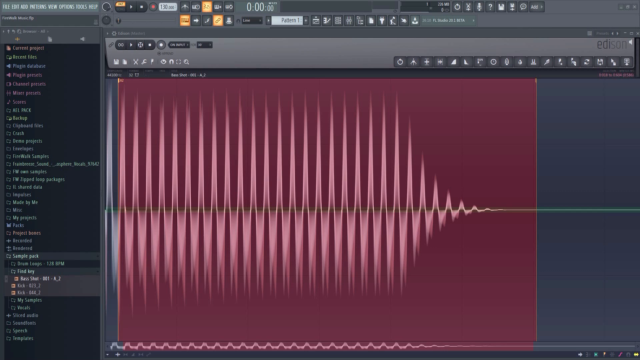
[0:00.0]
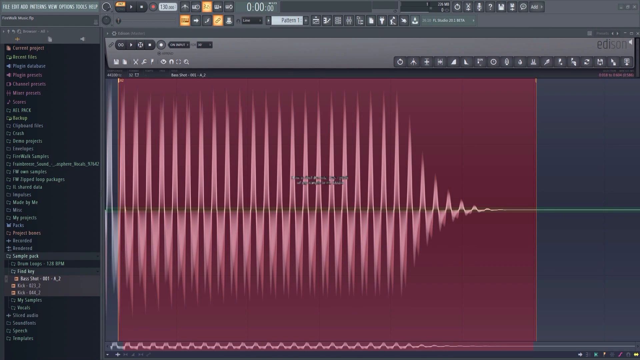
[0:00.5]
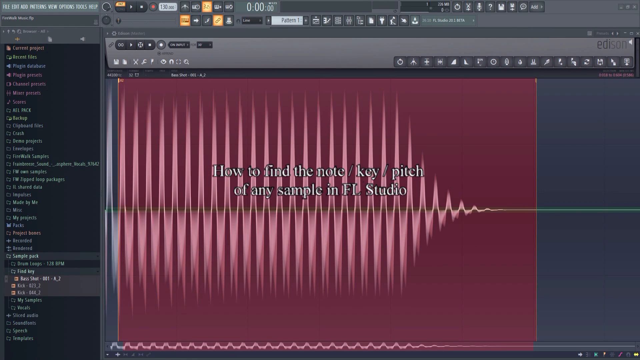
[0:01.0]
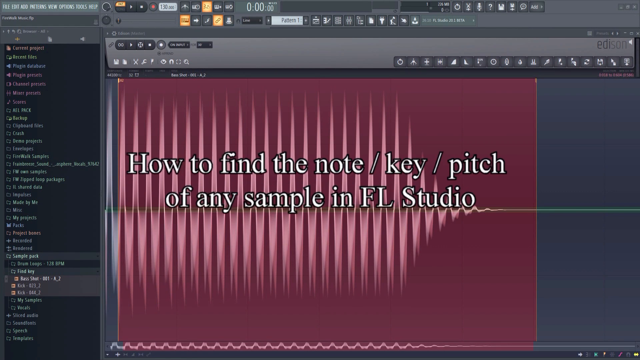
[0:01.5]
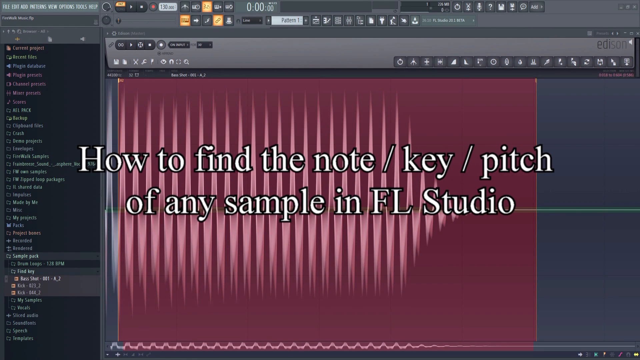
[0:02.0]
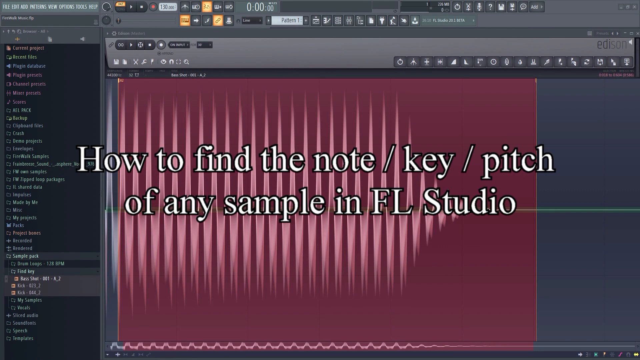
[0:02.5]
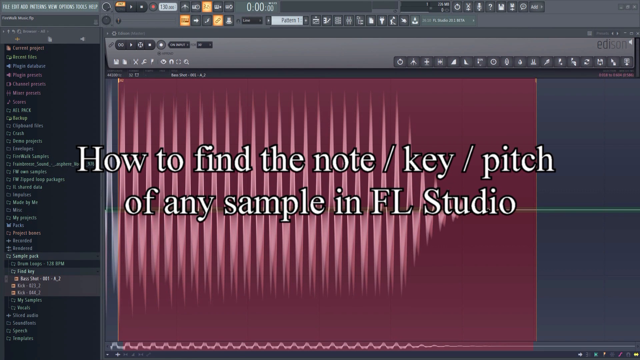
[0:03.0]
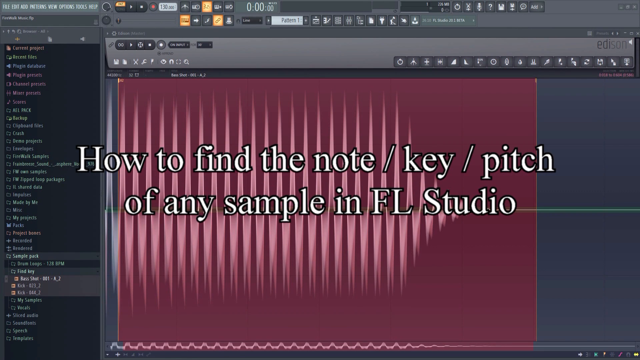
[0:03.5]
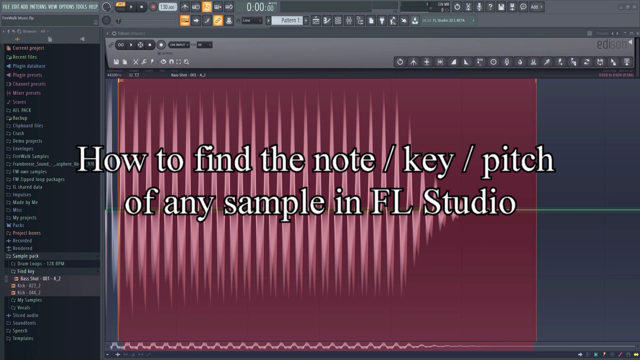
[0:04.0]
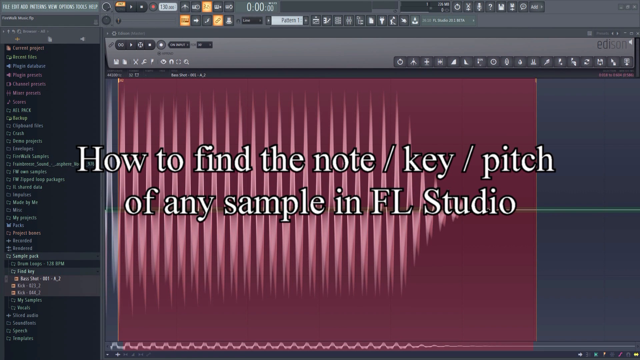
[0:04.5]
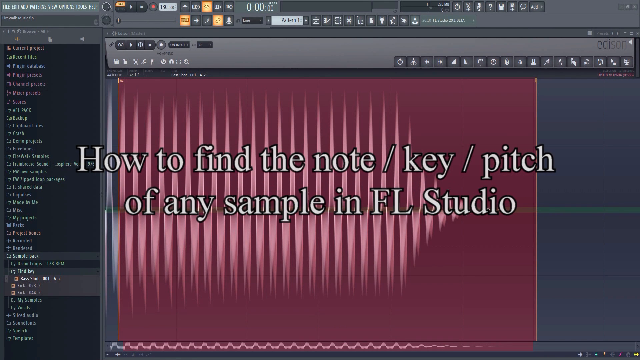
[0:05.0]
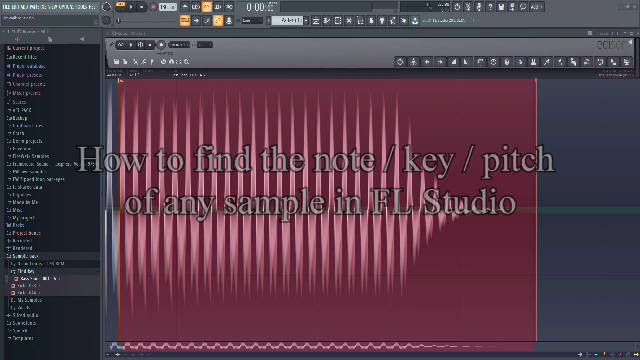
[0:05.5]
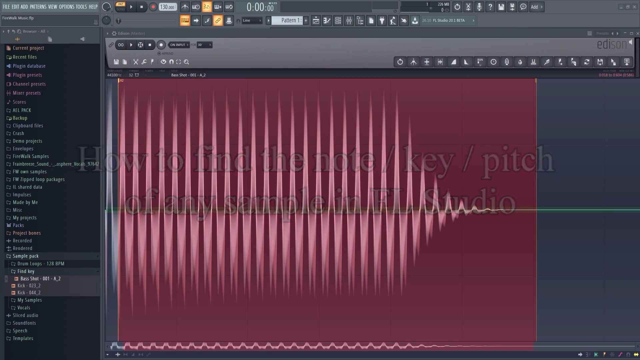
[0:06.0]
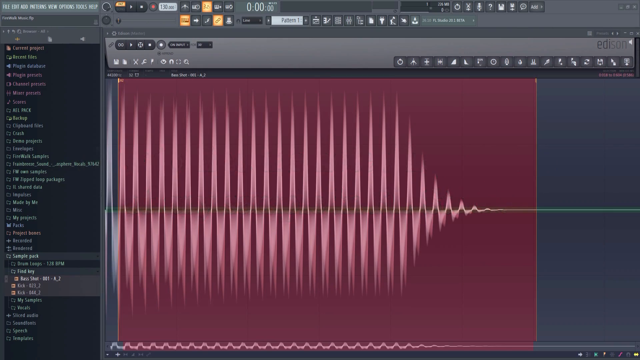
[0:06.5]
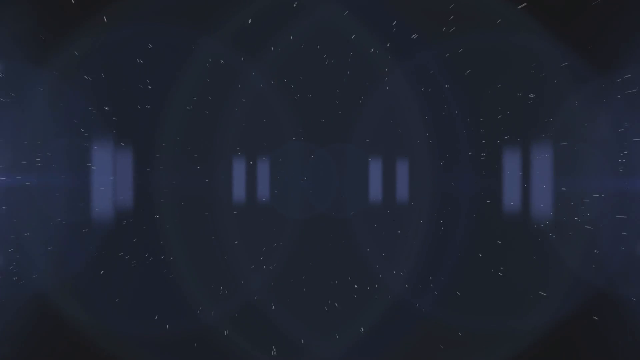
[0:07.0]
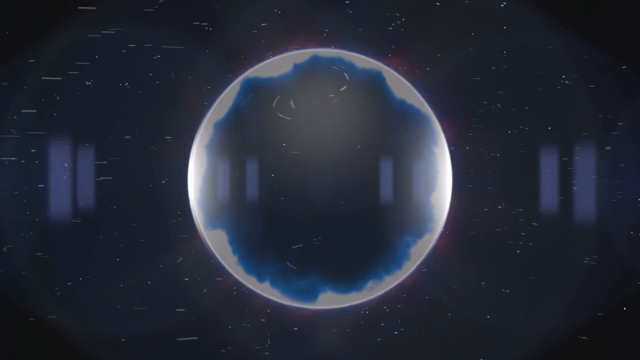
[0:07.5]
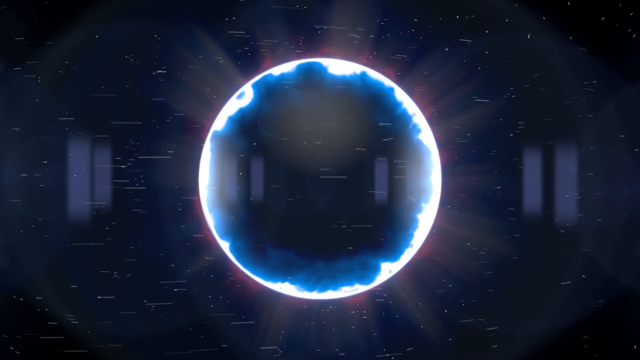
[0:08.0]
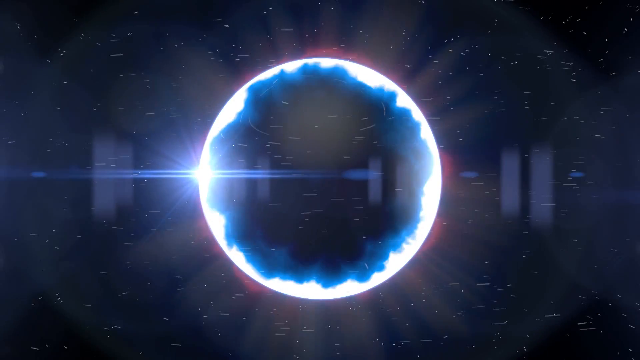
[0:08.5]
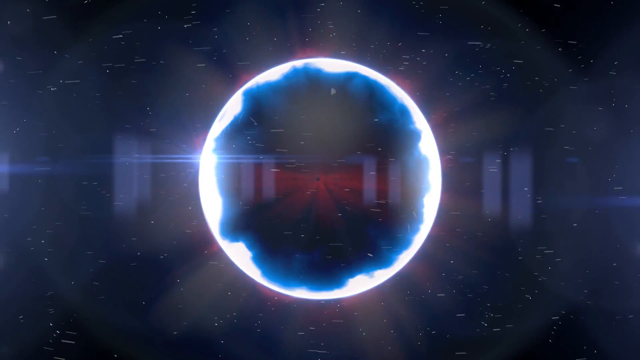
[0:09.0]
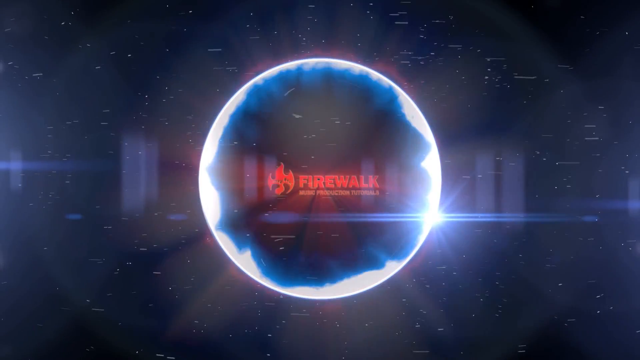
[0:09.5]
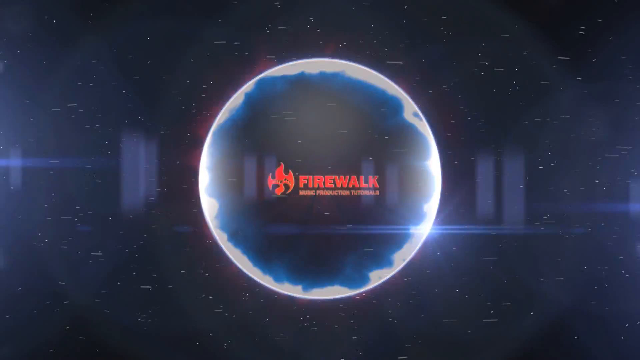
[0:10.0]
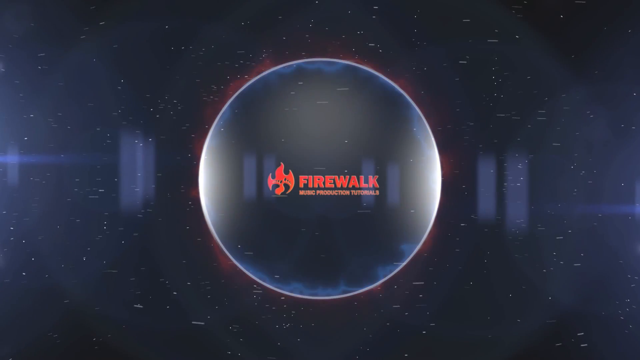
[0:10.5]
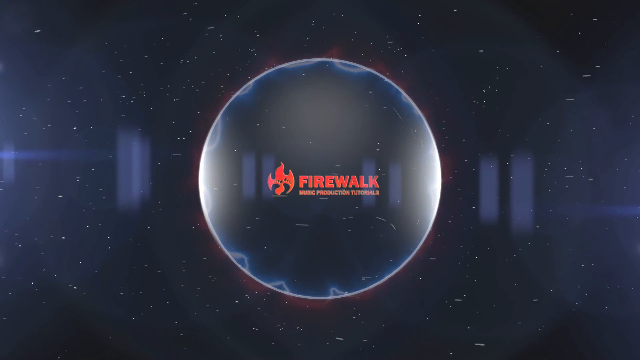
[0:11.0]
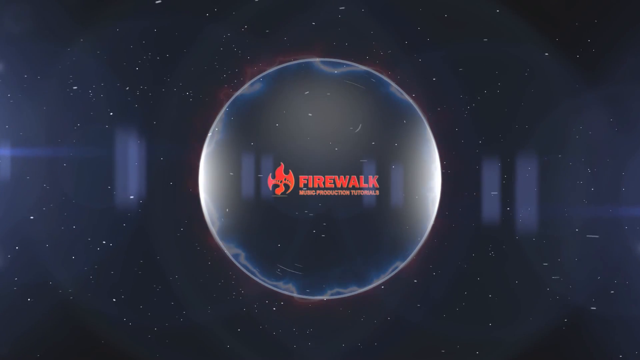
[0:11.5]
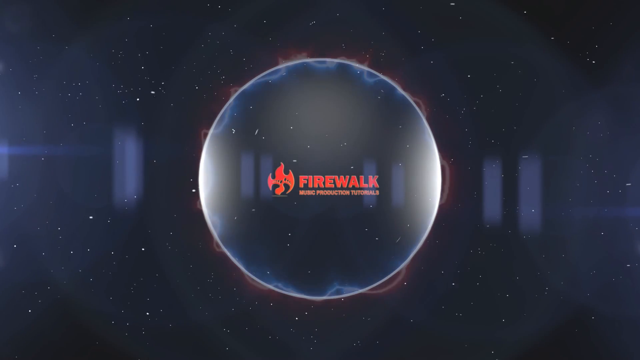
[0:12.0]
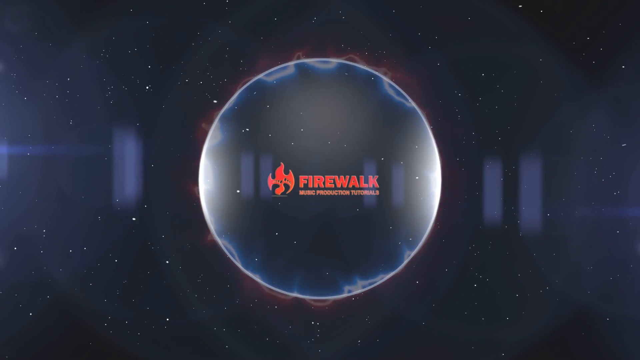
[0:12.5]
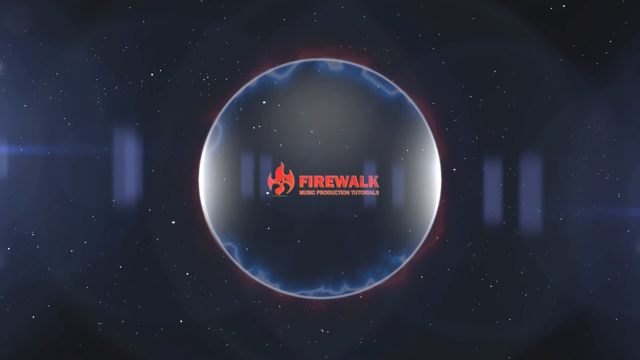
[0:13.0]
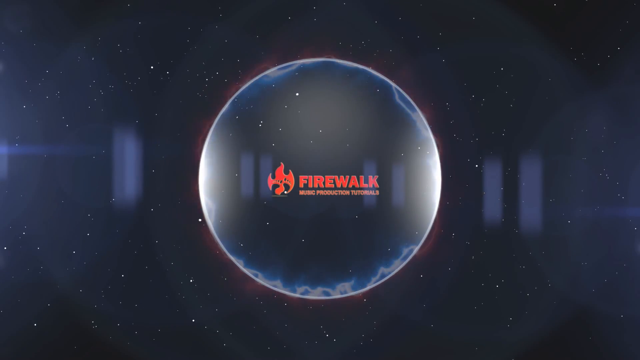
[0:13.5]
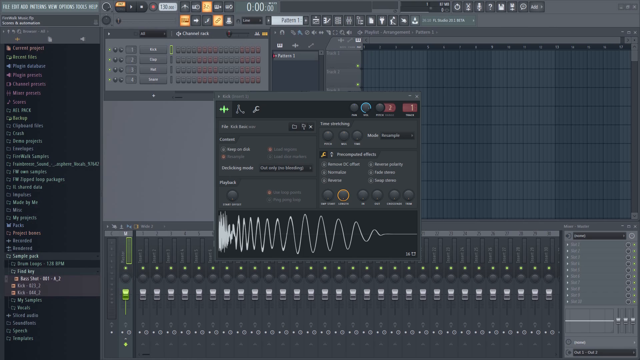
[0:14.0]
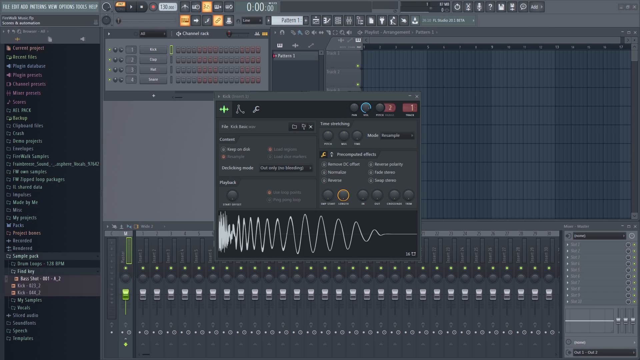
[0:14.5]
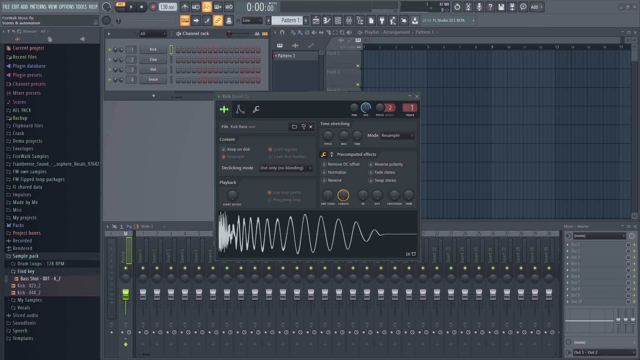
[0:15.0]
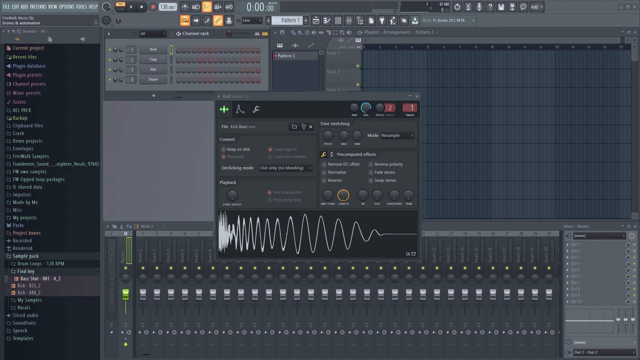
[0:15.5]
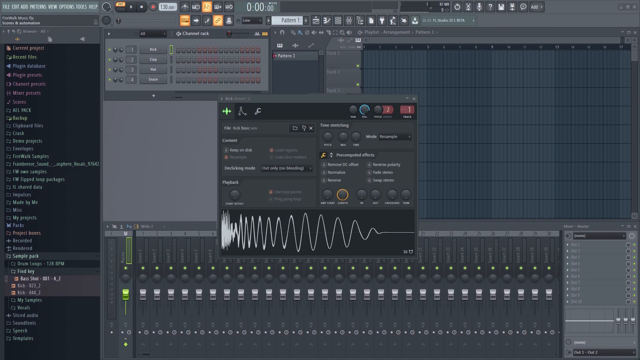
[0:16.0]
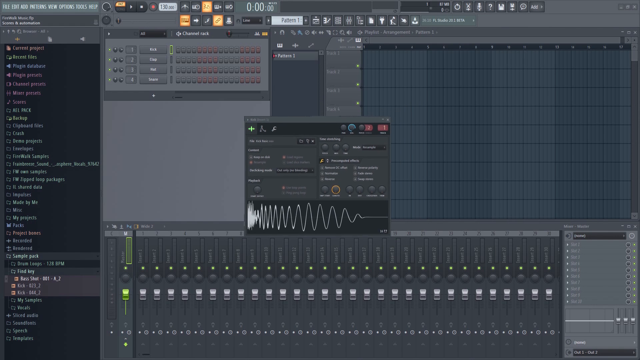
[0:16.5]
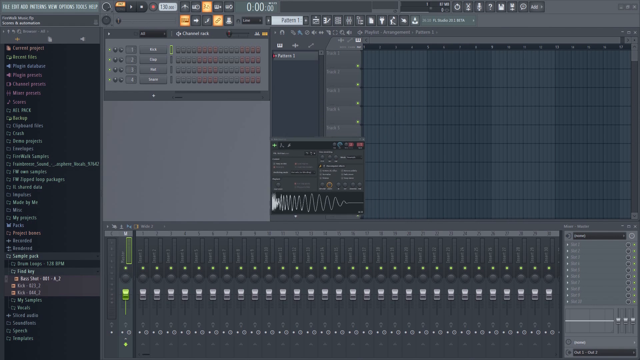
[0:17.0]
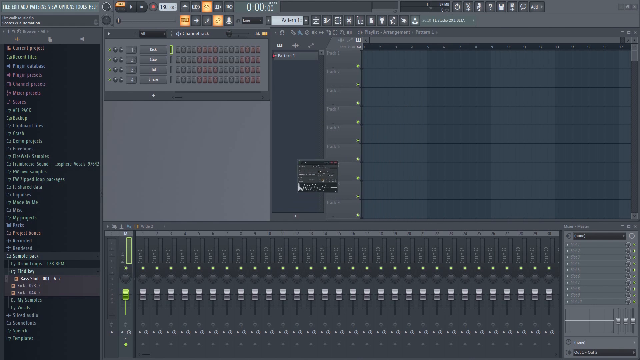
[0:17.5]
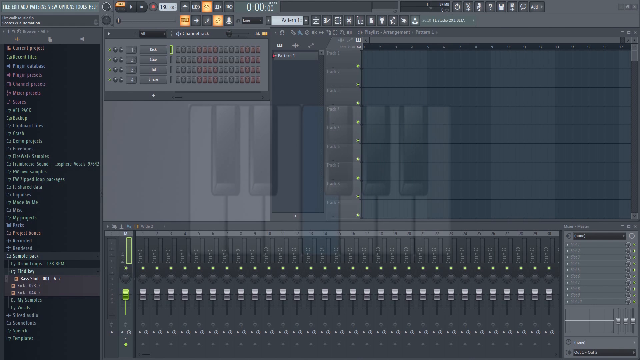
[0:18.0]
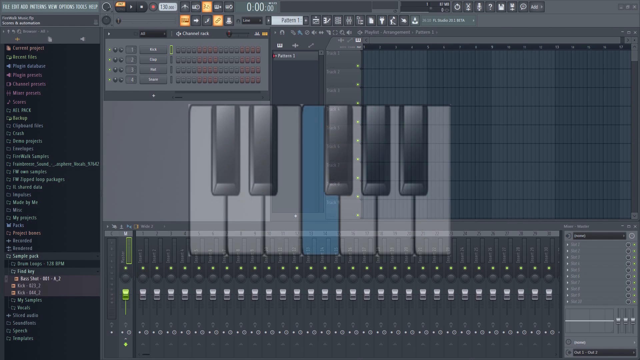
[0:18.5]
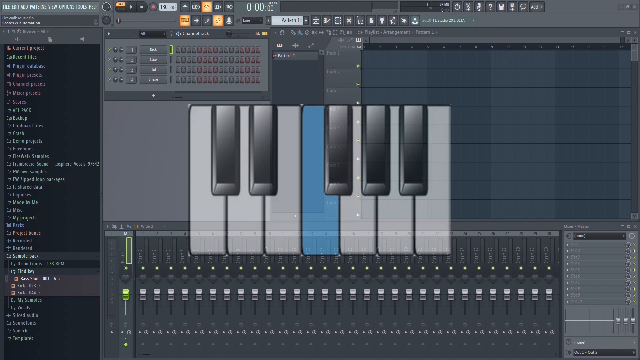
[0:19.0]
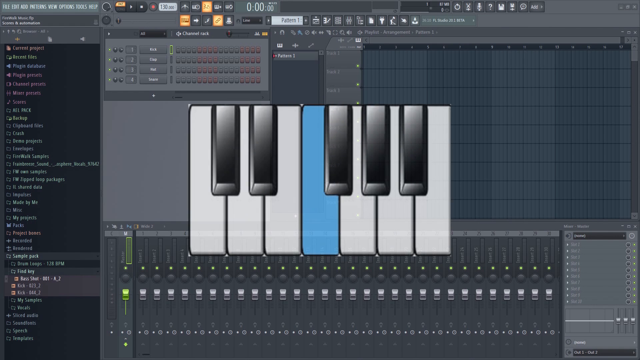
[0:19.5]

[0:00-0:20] A software program is shown on someone's computer. White text in the center of the screen, in the foreground over the program, reads "how to find the note/key/pitch of any sample in FL Studio." On the left side of the screen is a menu with many selections, but they are so small they are hard to see and appear somewhat blurry. The scene then changes to a star field with a bubble-looking circle in the center of the screen. In the center of the bubble, red text reads "Fire Walk." Around the bubble is a kind of graphic or effect resembling lightning, electricity or some kind of waves vibrating around the circle.